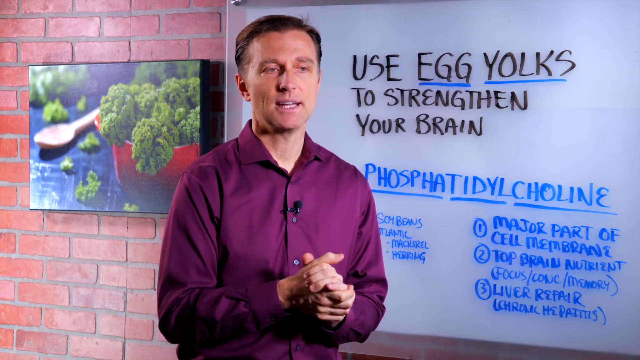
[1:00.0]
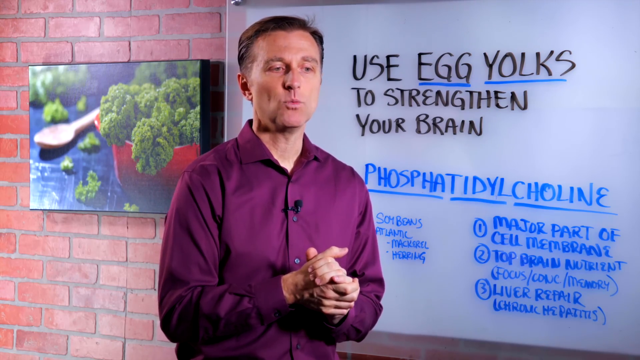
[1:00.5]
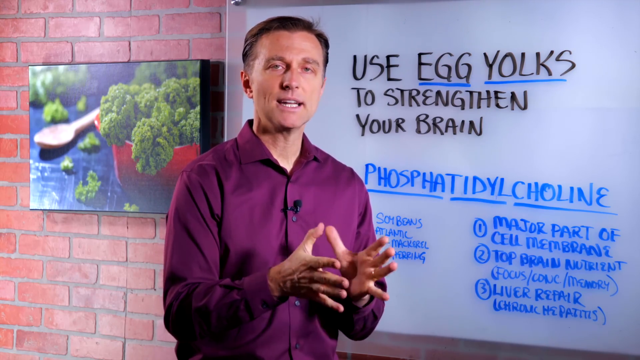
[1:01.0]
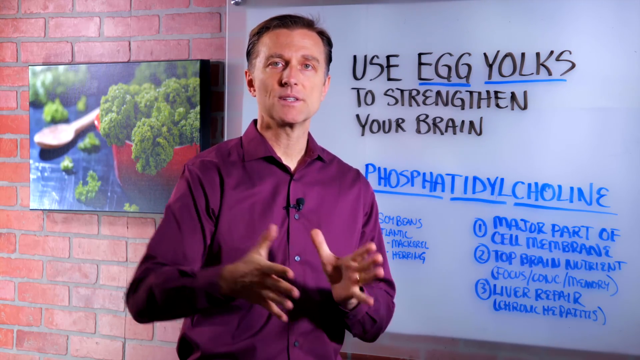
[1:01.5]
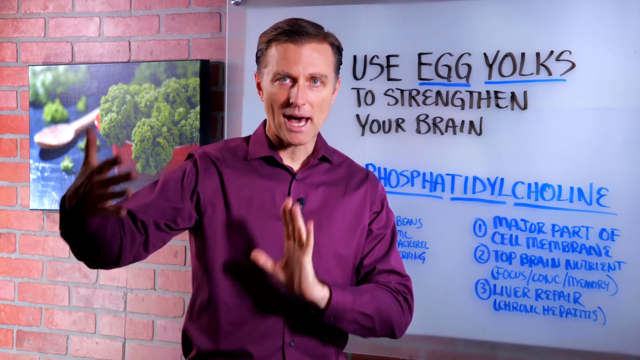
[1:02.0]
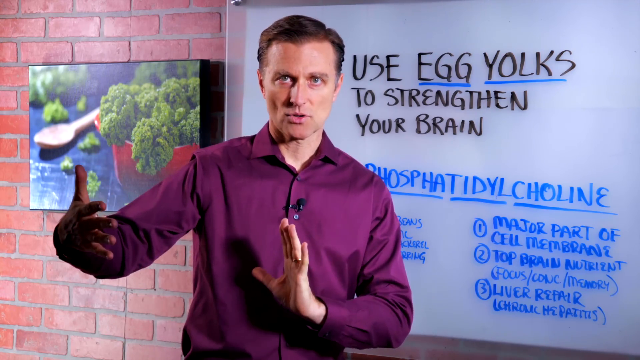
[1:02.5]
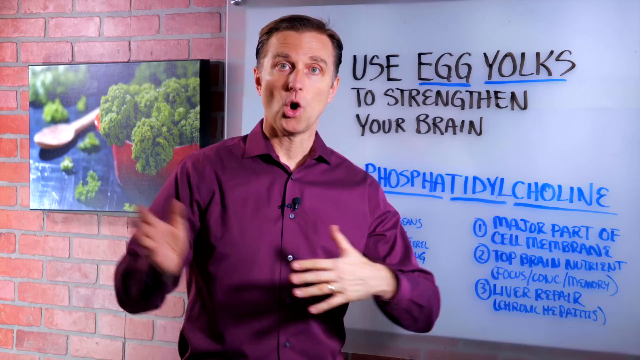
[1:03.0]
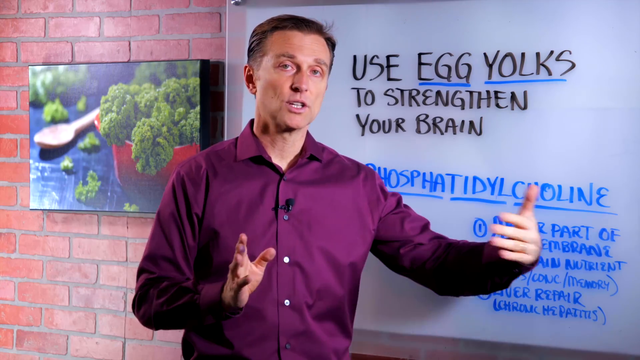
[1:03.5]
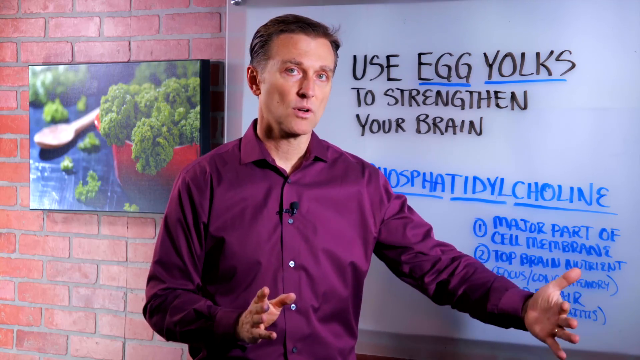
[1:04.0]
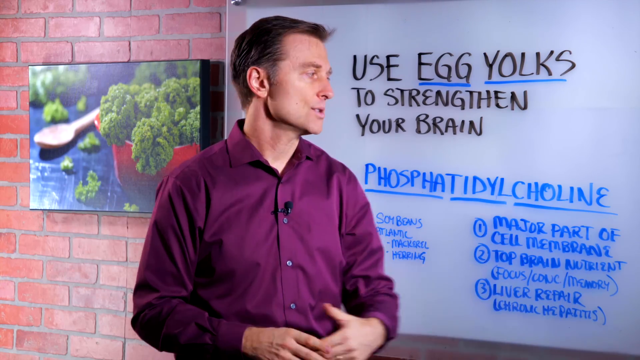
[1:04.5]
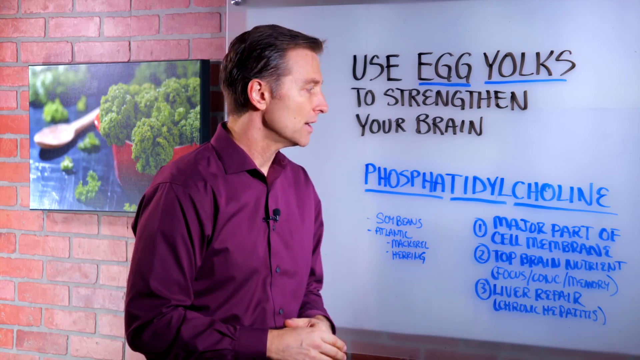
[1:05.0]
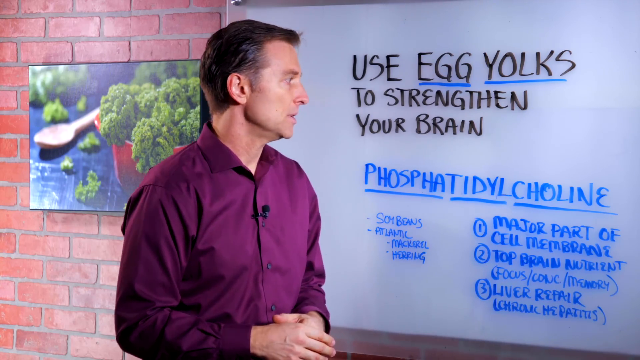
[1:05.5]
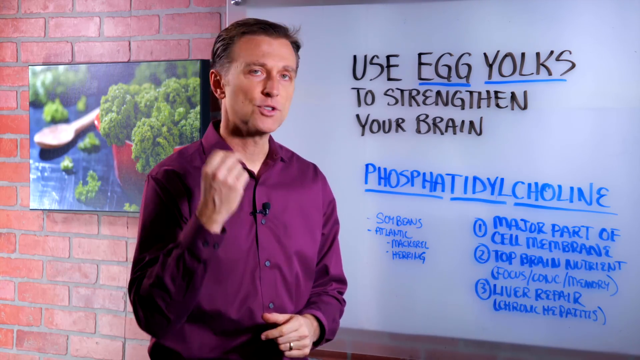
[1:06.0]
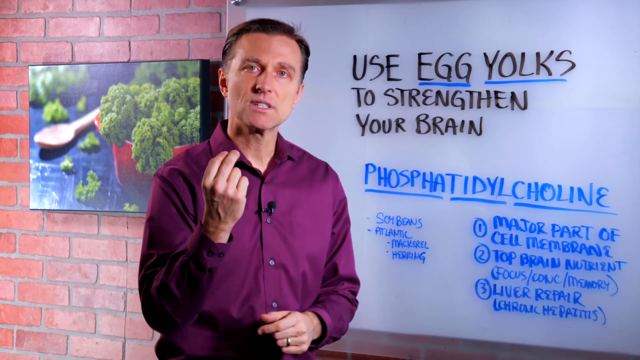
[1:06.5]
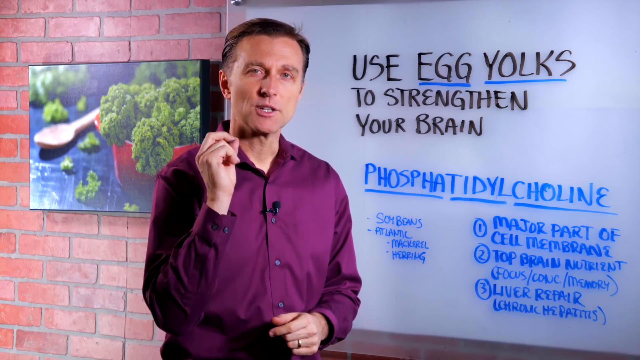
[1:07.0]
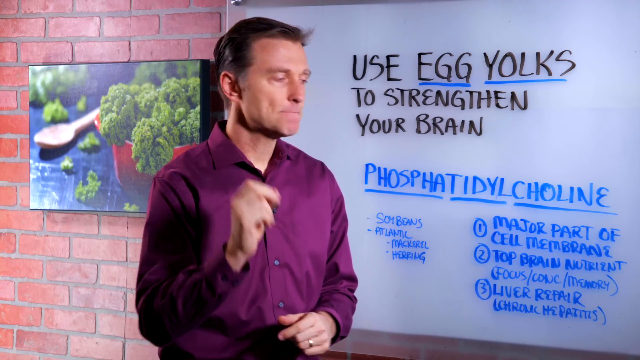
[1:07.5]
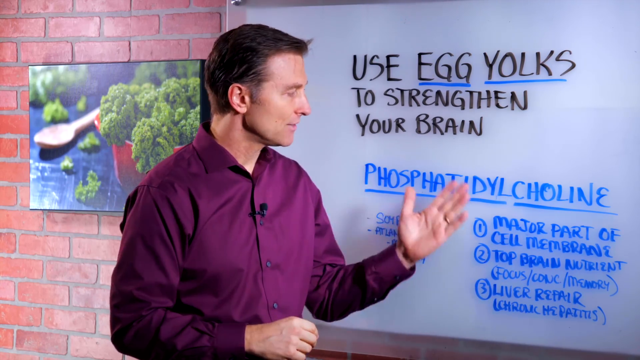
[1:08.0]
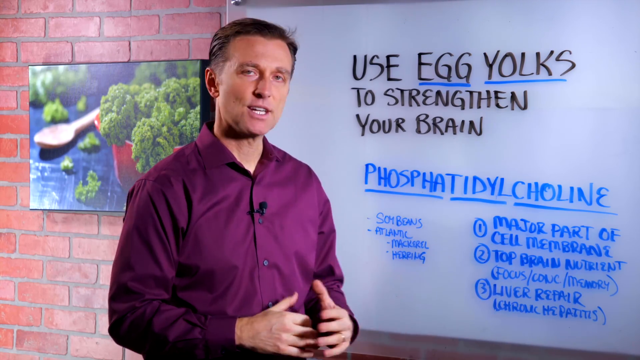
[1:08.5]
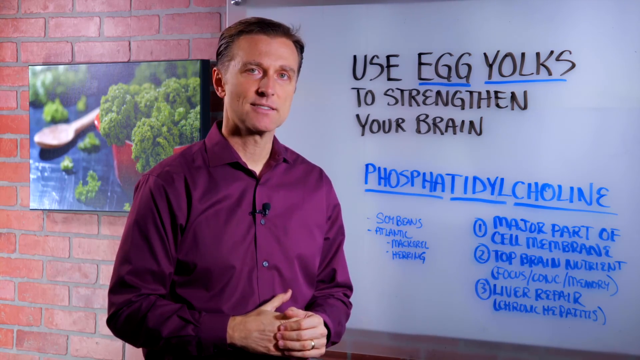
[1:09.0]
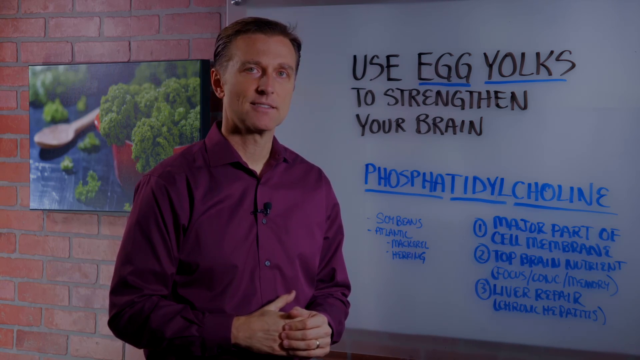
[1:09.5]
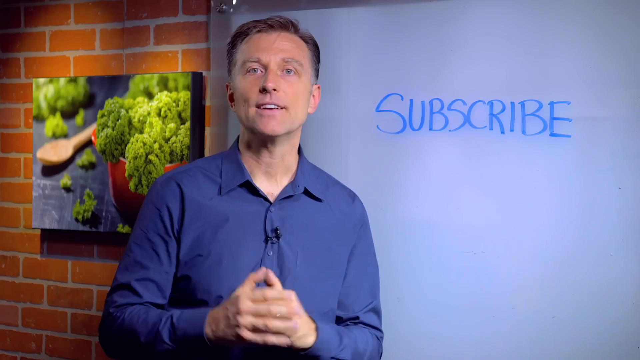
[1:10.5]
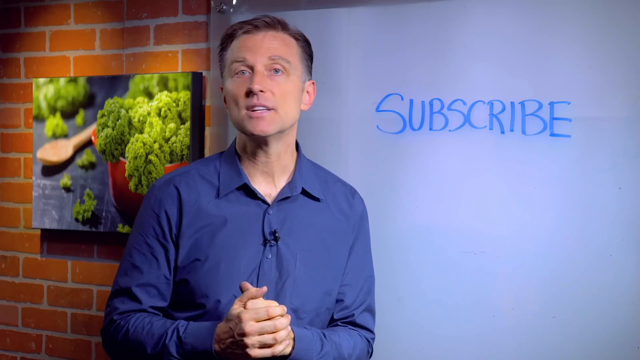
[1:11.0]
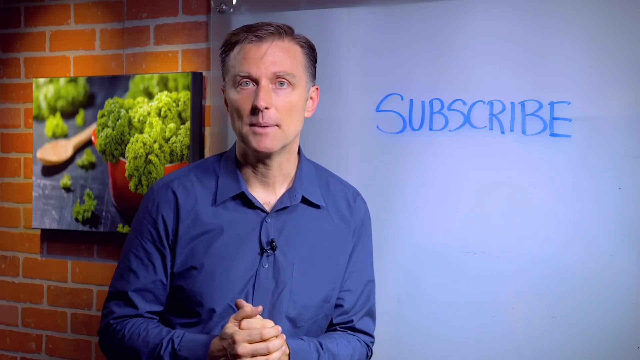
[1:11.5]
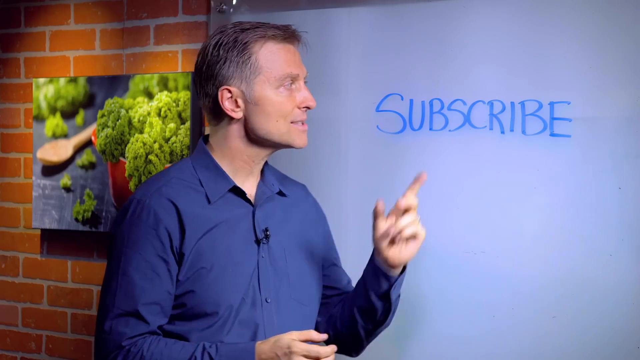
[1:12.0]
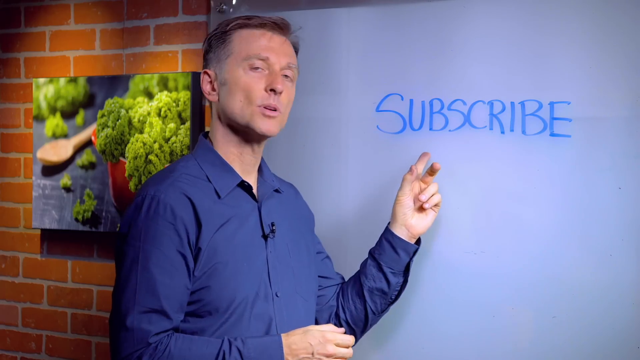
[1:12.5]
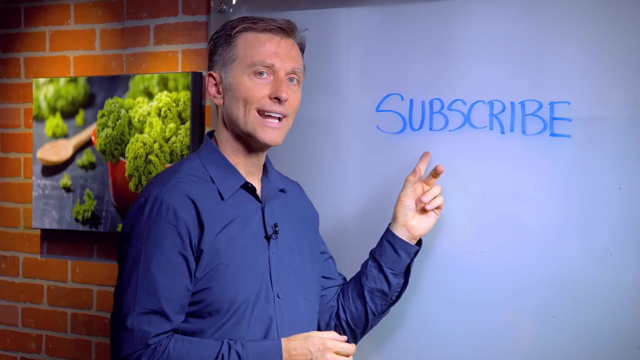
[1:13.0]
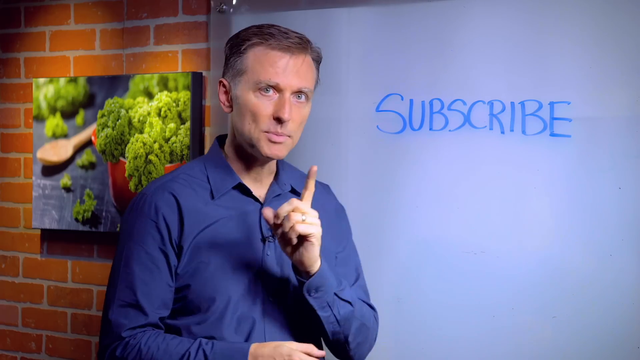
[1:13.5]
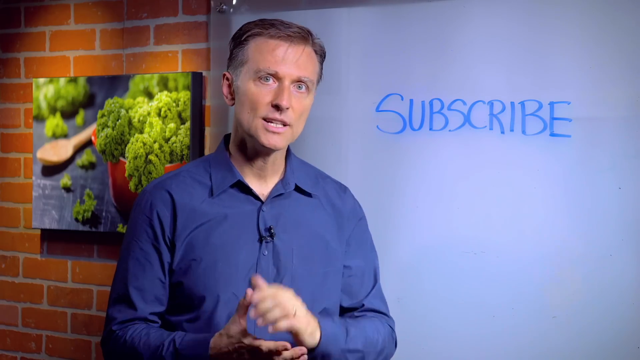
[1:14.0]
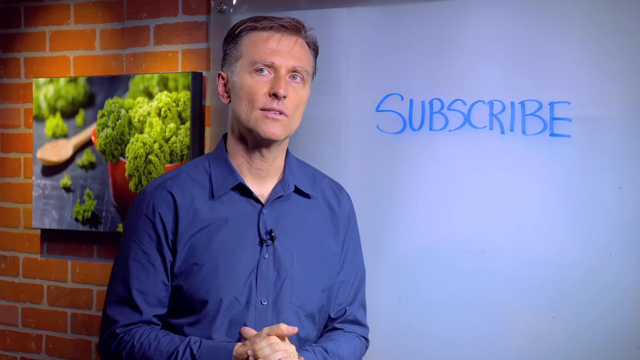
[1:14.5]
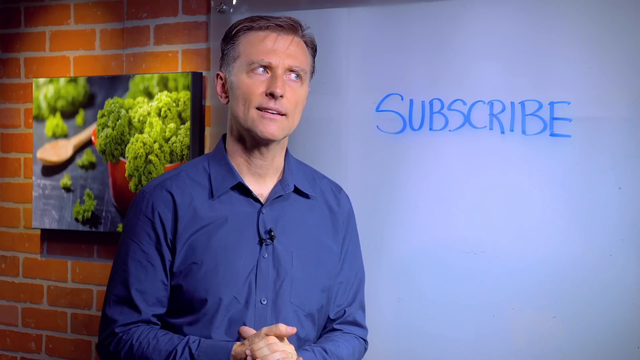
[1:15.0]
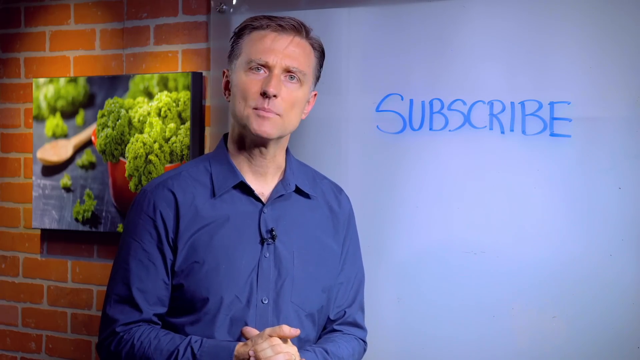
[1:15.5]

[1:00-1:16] The white Caucasian man, with slightly tan, reddish skin and short dark hair, stands in front of a dry erase board. There is a brick wall and a photo of broccoli on the wall. The setting seems to be some kind of nutritional education center. No credentials for the man are shown. The video then cuts to a scene where he asks viewers to subscribe, and then shows another video that can be clicked on, about the keto diet.